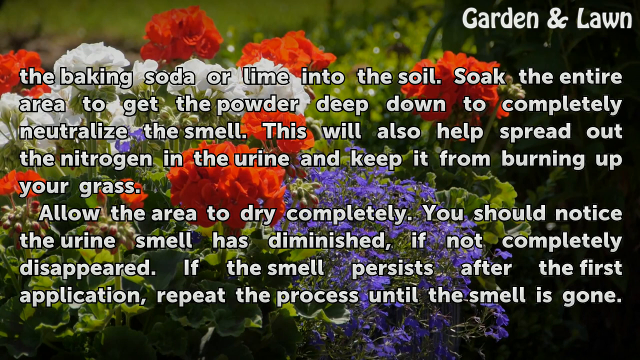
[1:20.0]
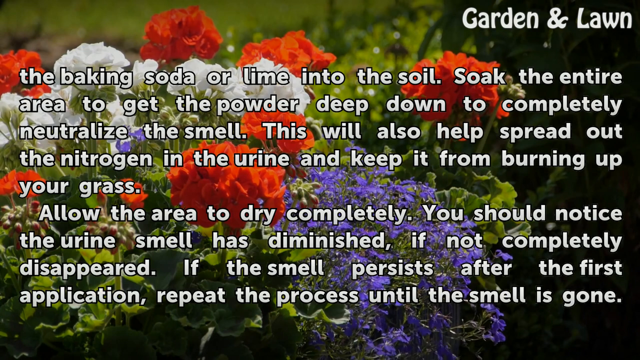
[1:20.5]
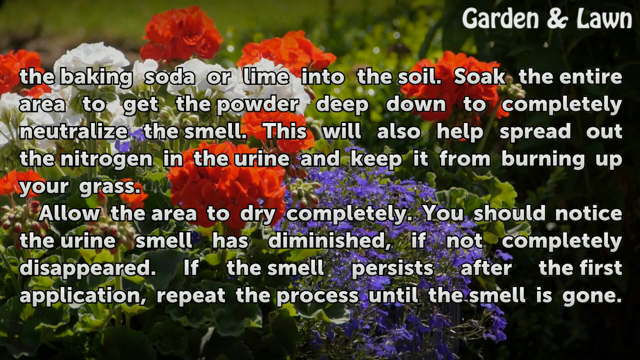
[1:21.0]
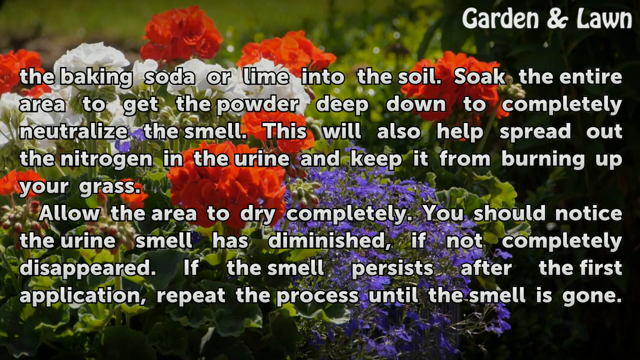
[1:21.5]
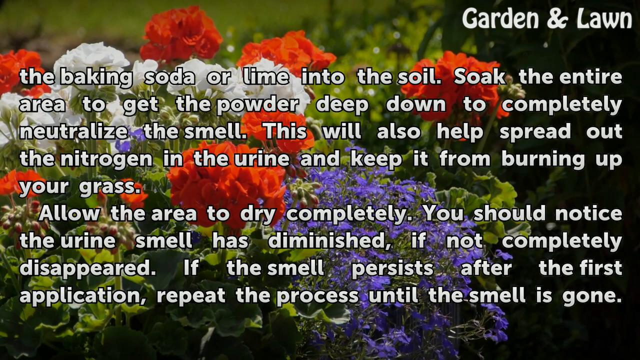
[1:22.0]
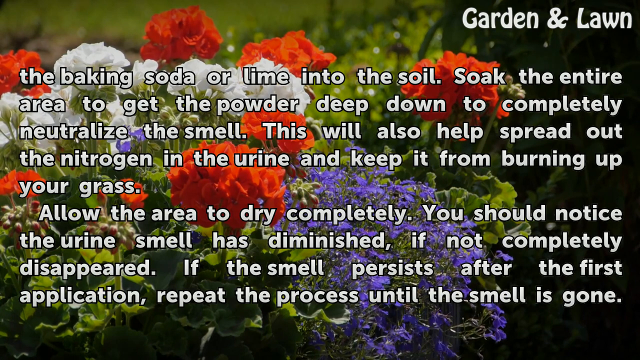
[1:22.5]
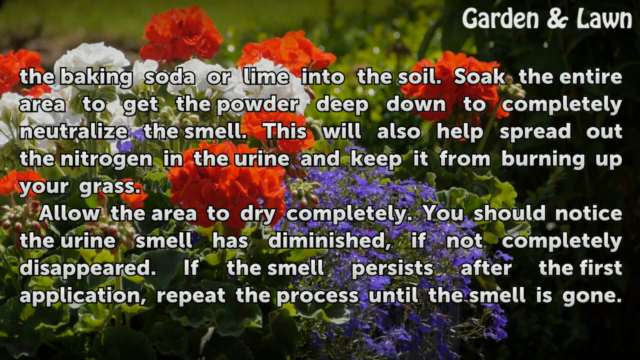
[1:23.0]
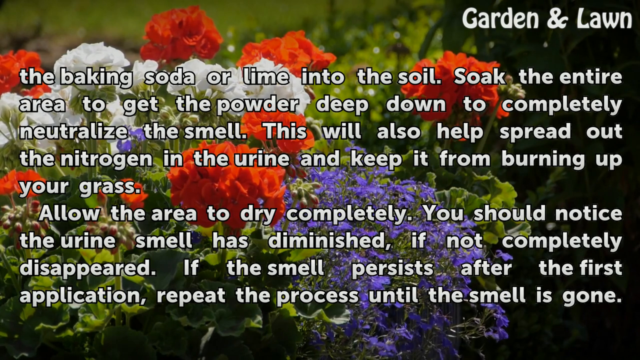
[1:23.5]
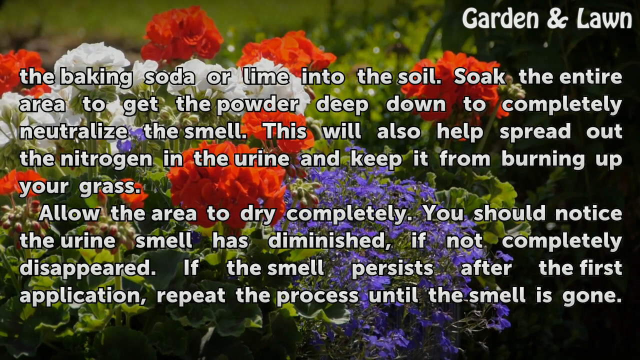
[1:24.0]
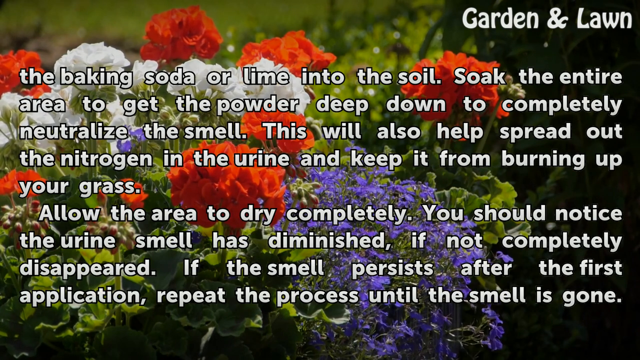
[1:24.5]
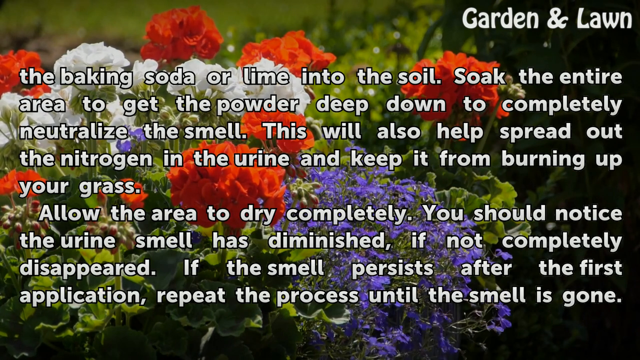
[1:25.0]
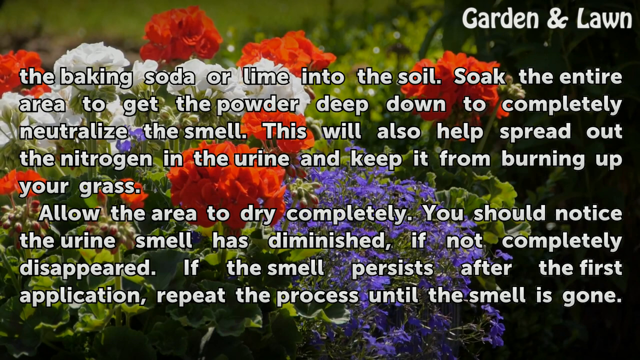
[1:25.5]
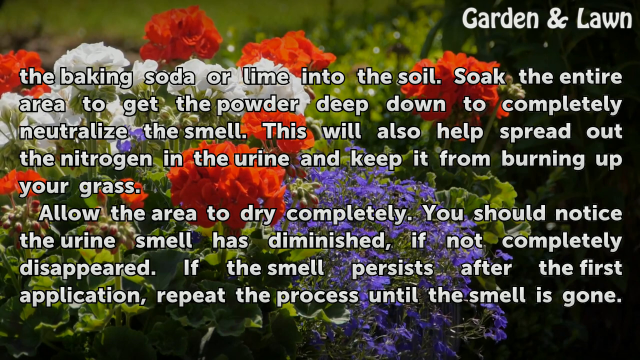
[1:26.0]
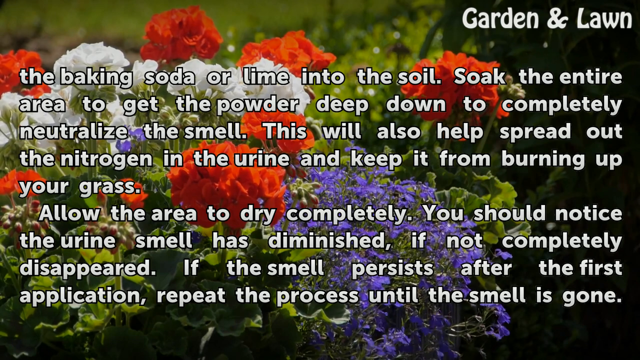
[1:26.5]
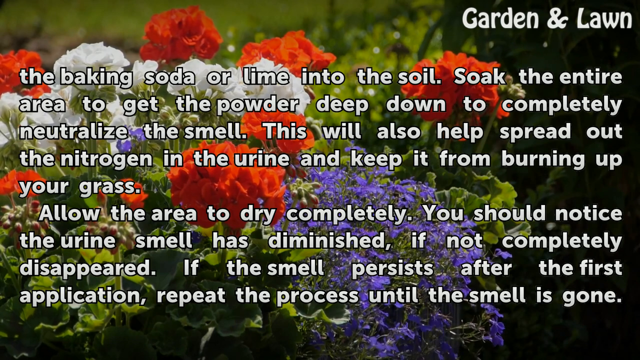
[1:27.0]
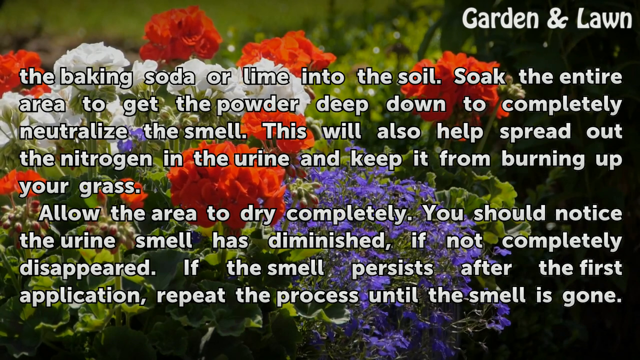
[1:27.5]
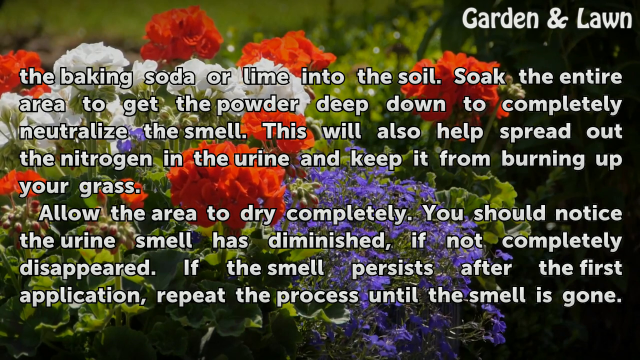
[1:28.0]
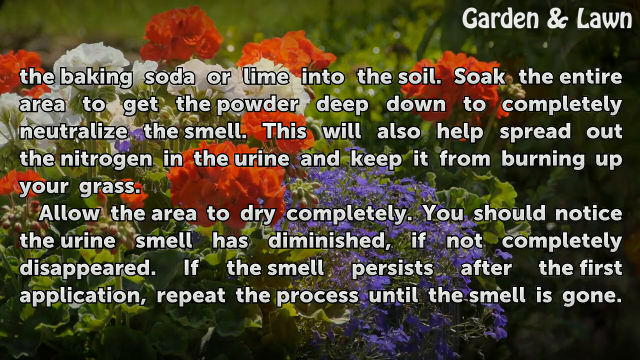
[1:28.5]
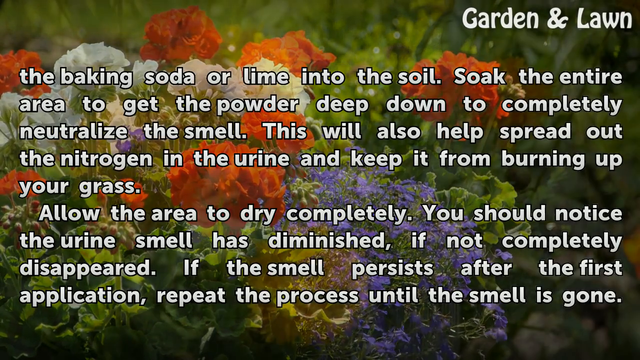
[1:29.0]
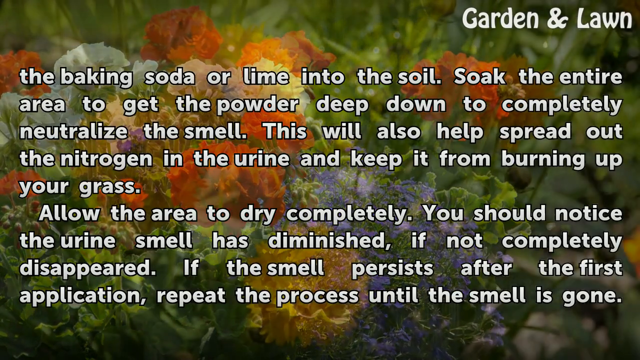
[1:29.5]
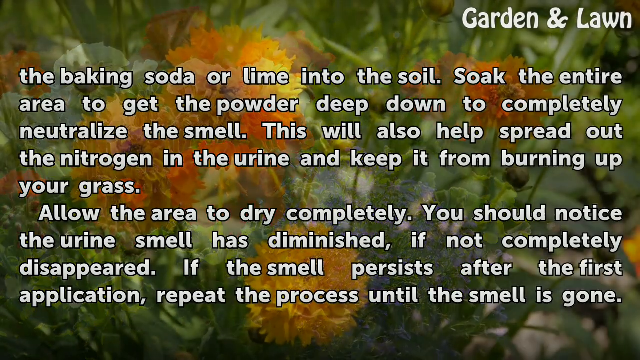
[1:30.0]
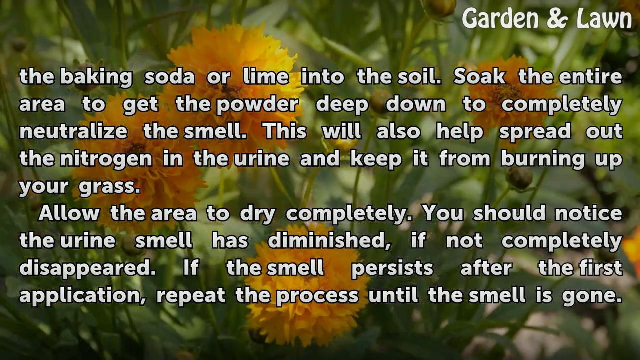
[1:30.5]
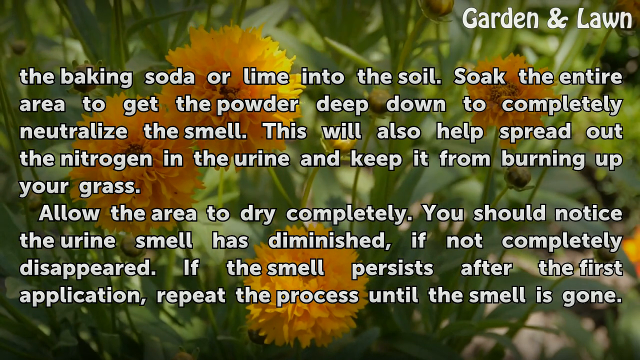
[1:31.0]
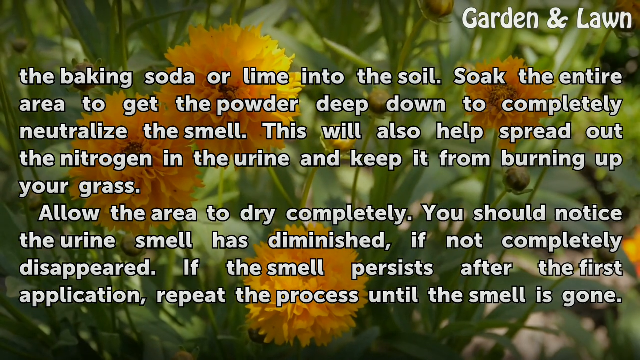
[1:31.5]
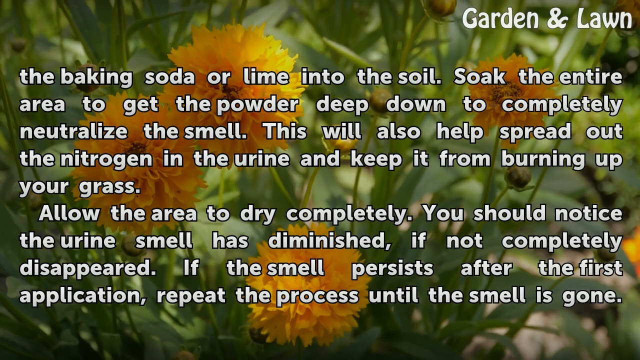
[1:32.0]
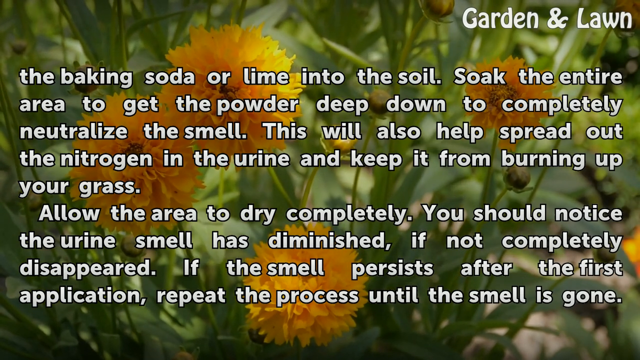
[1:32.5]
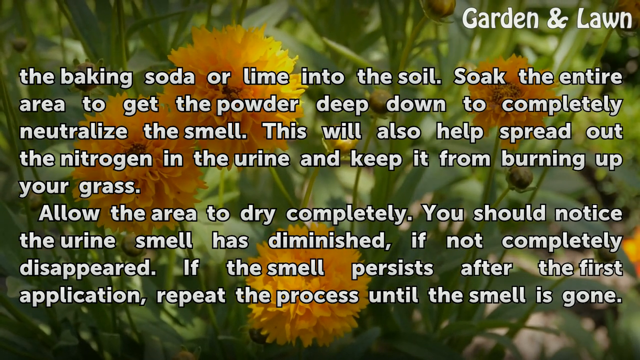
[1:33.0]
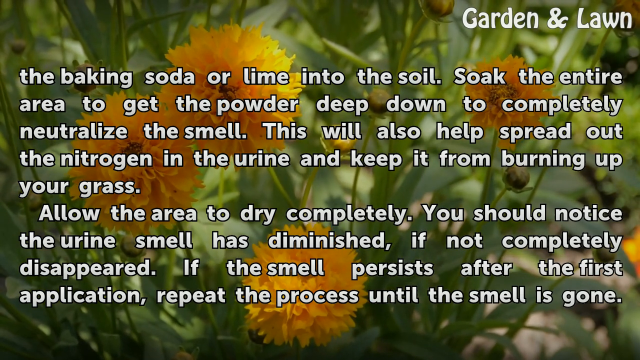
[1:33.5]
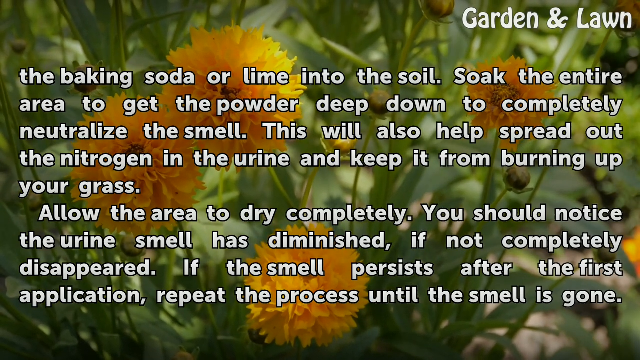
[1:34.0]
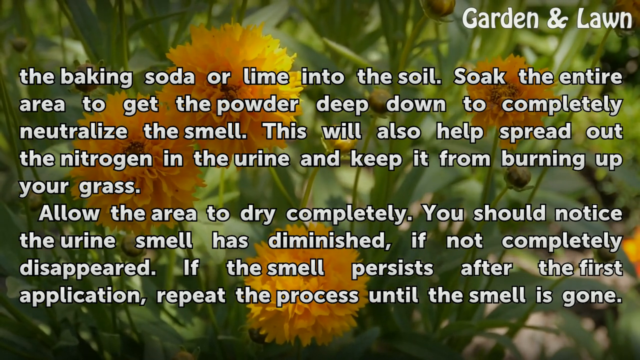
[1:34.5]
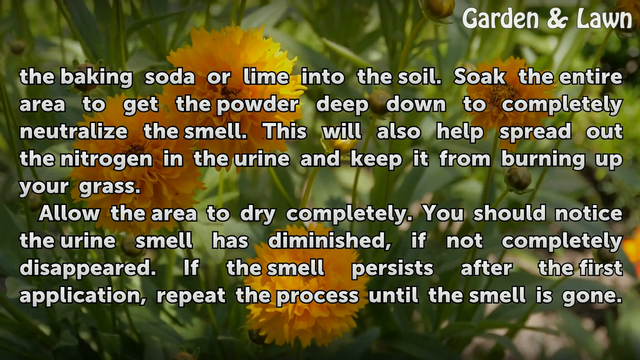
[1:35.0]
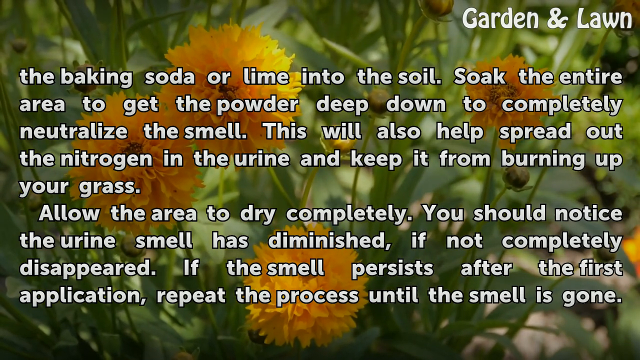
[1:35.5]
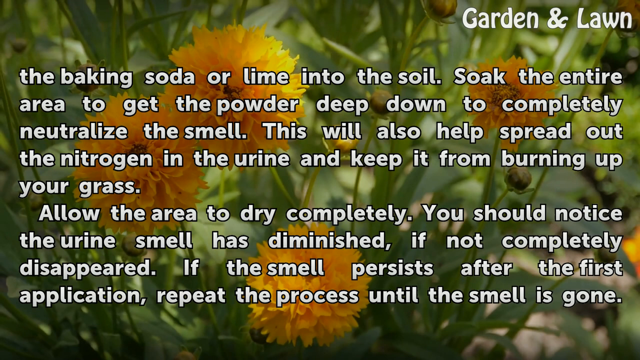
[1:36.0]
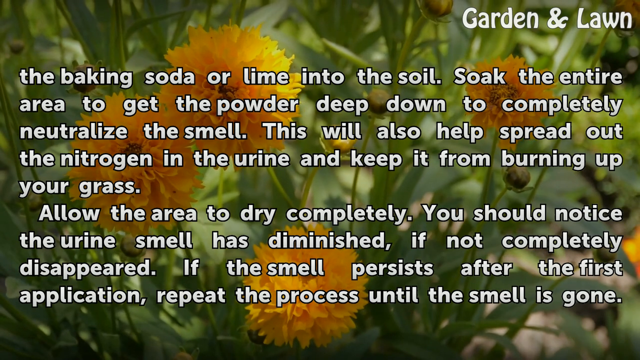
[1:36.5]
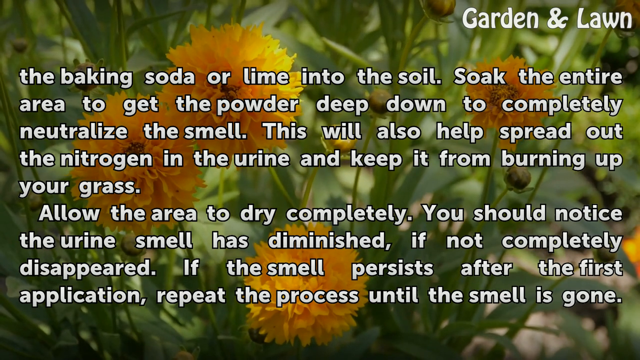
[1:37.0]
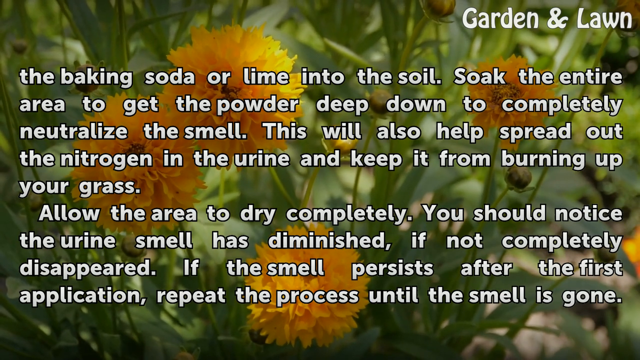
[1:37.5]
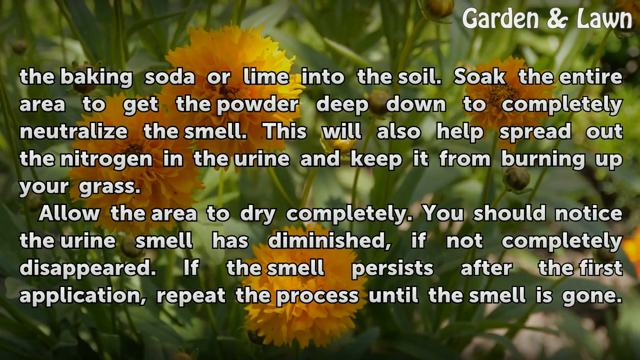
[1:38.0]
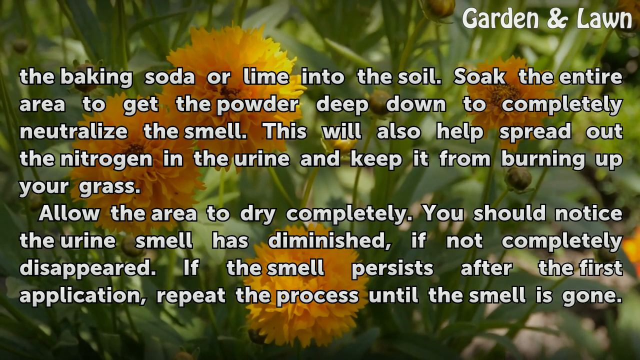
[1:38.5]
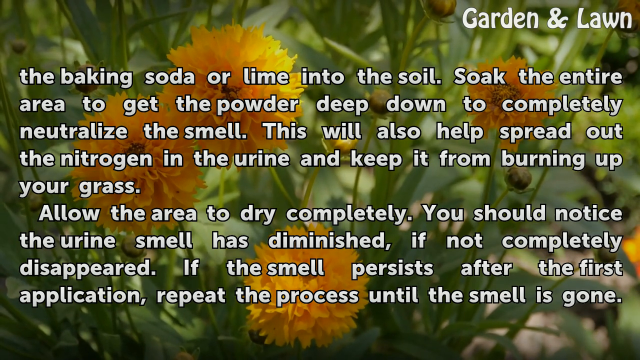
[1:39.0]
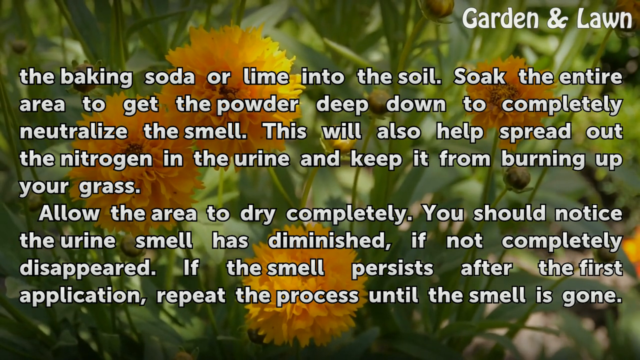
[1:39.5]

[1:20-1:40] The shot is apparently more zoomed in. To the right of the right carnation, the one closest, is a purple cluster of many tiny flowers, almost like little buds bunched together. Between the right carnation and the purple ones, in front of the purple ones, a little stem comes up; it looks like it may be the early formation of one of the carnations, with a bunch of green buds, the tips of two of them curving down like a teardrop, with a little red on the tips. The wind slightly blows some grass in the far distance, and some light shimmers. Mostly the purple cluster fills the view; its bottom right part moves up and down, but most of the mass barely moves. This fades into another set of flowers that look almost orange, like the kind one can blow on. There appear to be three or four clusters: two side by side and one below, with the right cluster lower and one catty-corner to the right. "Garden lawn" is at the top, along with the two sets of black text.